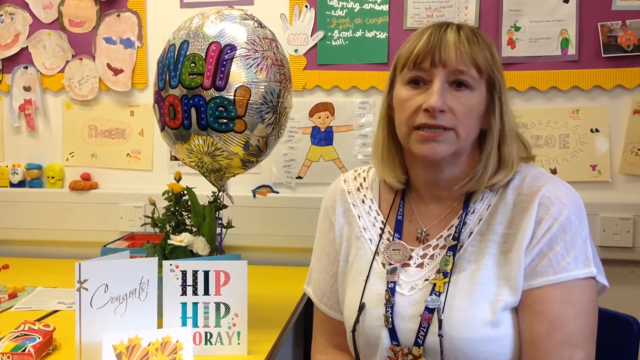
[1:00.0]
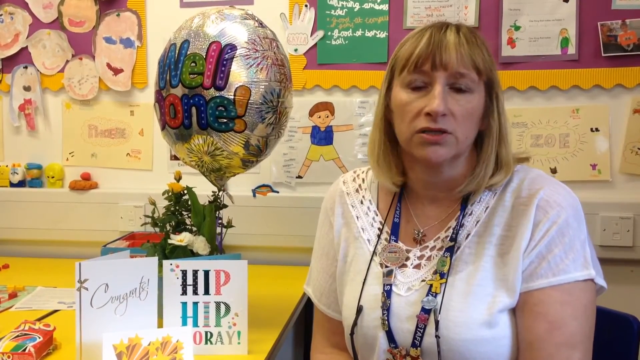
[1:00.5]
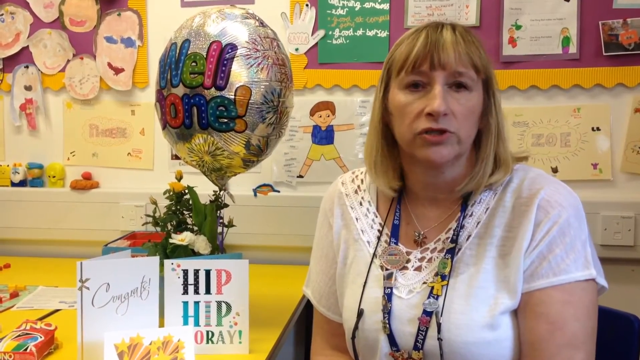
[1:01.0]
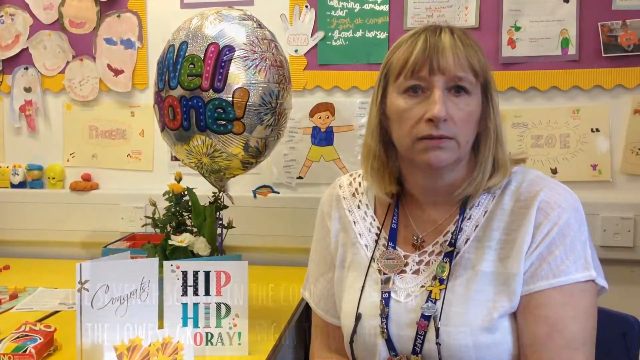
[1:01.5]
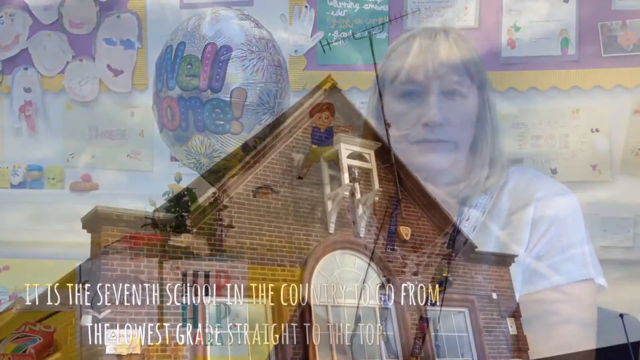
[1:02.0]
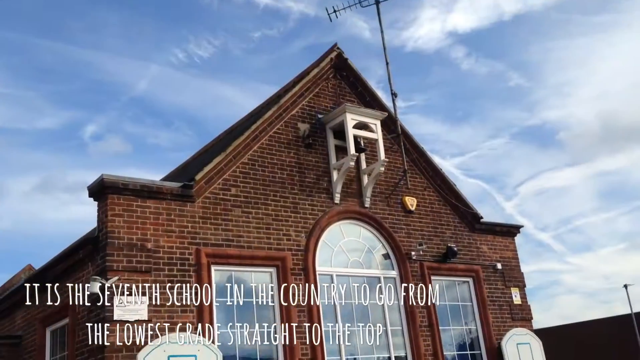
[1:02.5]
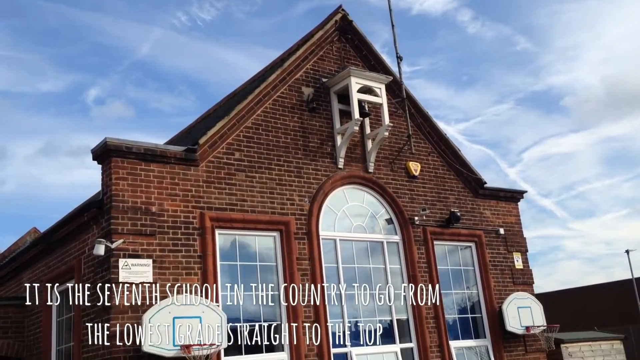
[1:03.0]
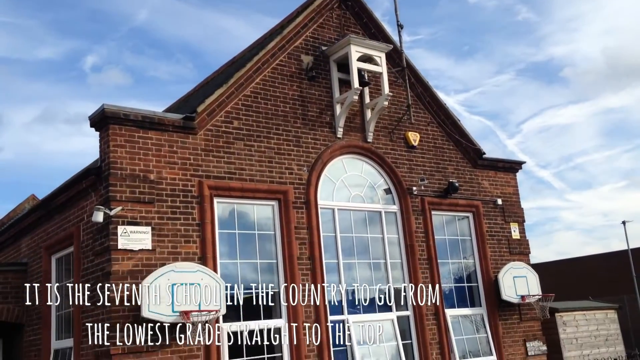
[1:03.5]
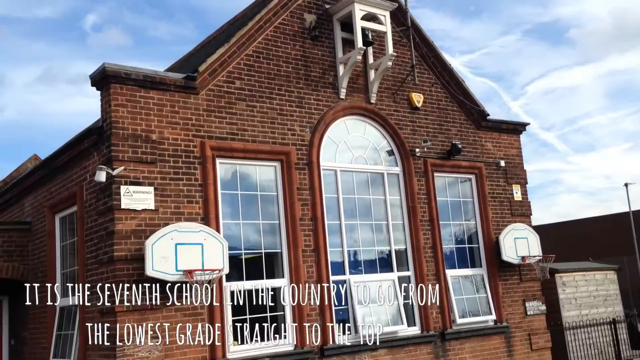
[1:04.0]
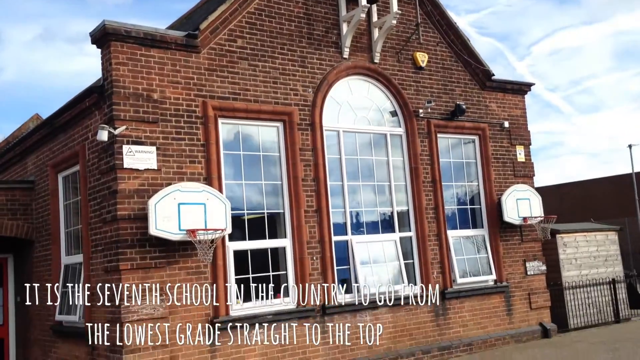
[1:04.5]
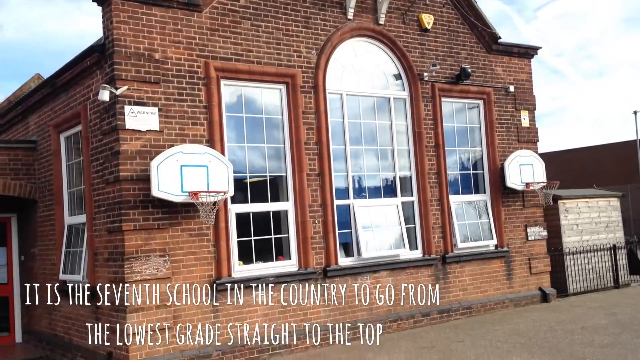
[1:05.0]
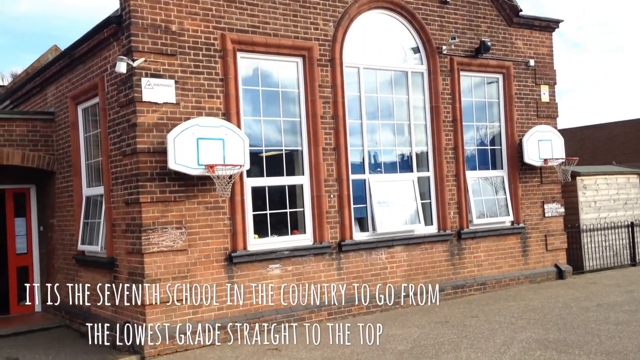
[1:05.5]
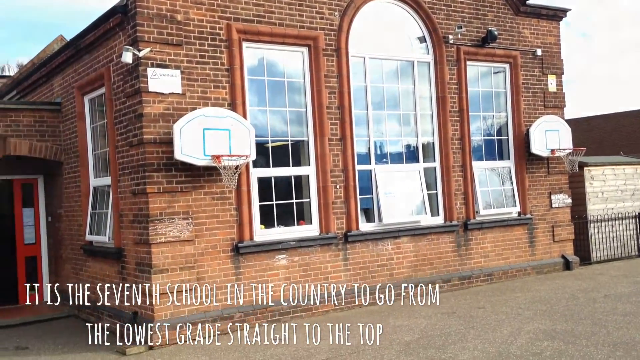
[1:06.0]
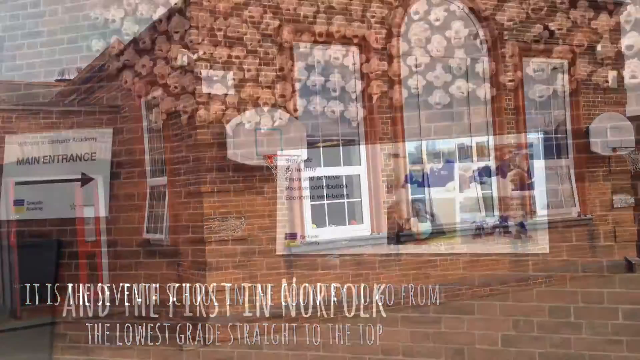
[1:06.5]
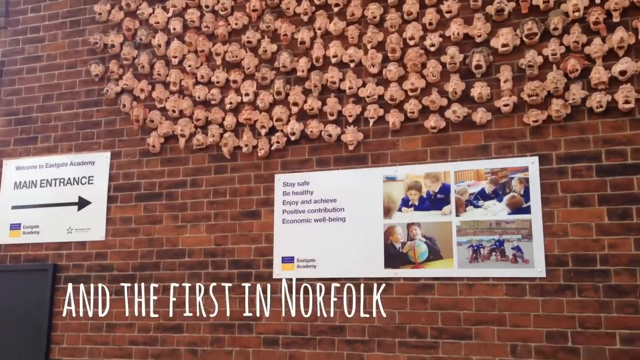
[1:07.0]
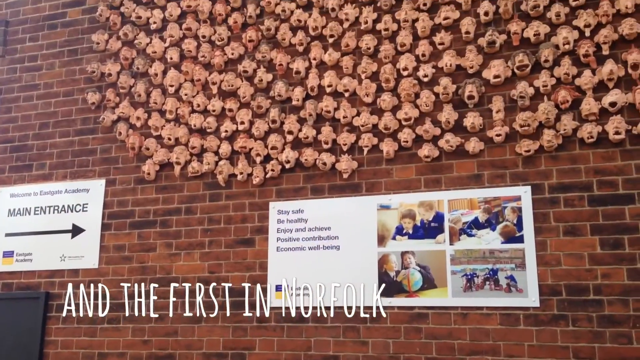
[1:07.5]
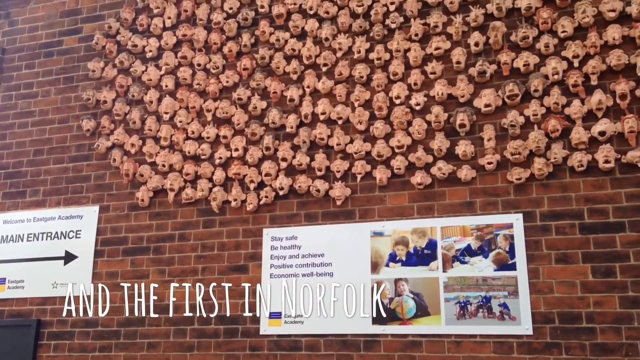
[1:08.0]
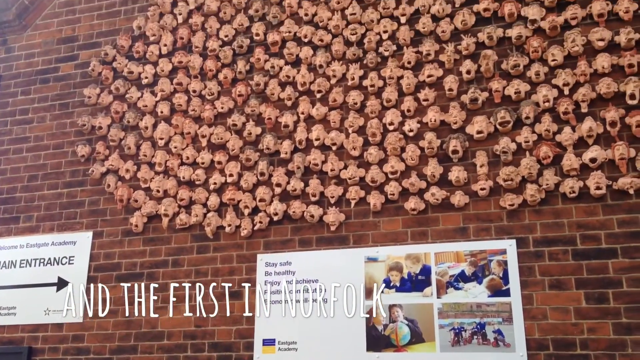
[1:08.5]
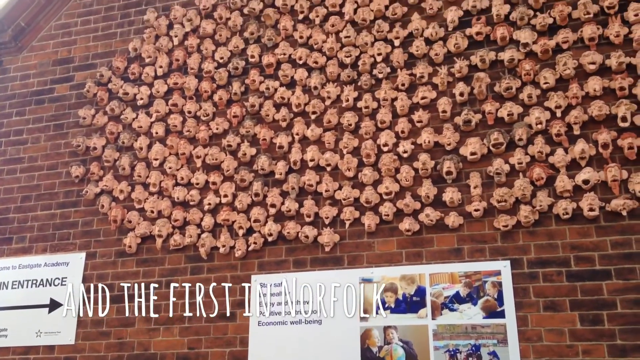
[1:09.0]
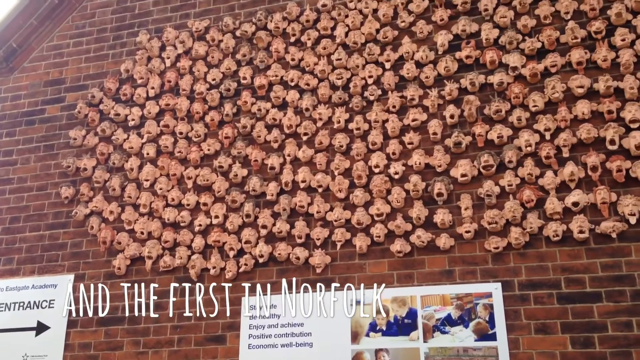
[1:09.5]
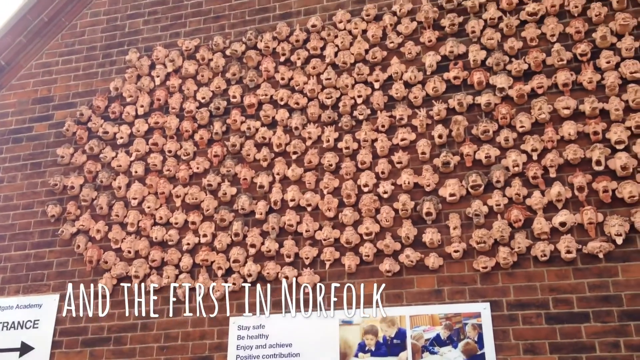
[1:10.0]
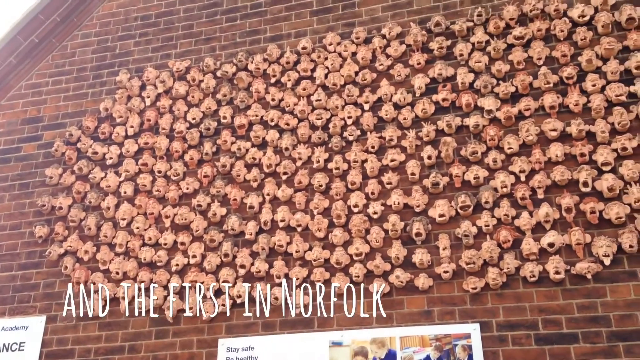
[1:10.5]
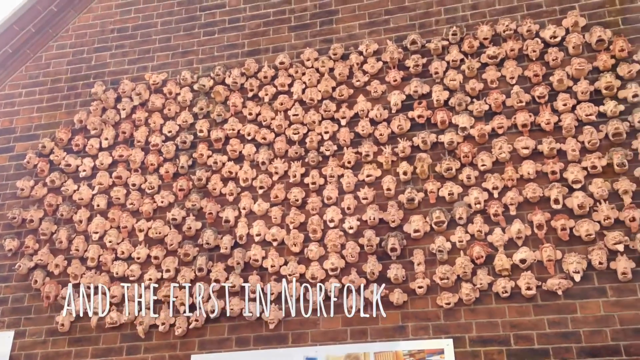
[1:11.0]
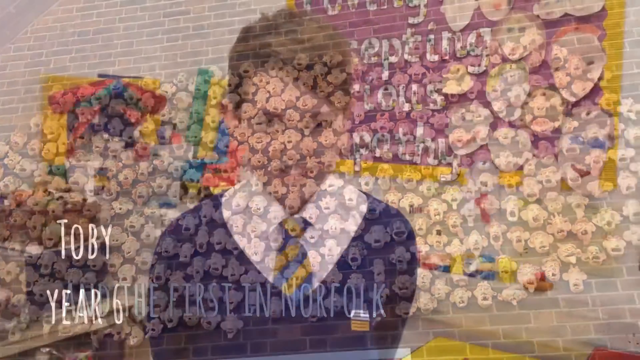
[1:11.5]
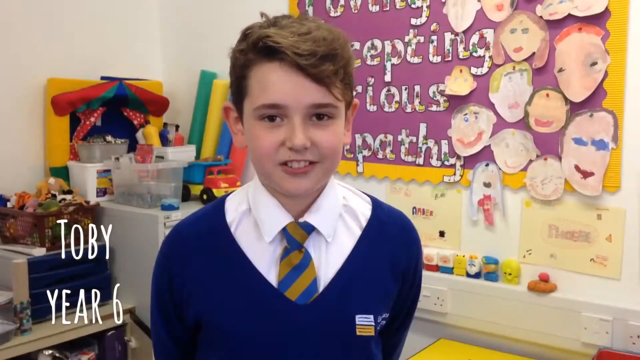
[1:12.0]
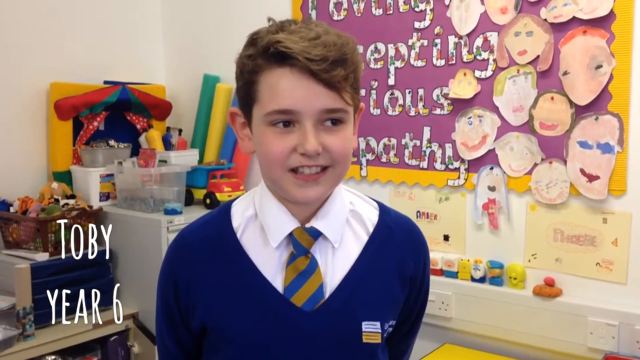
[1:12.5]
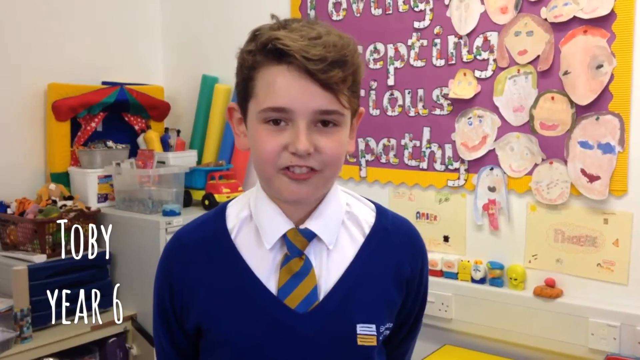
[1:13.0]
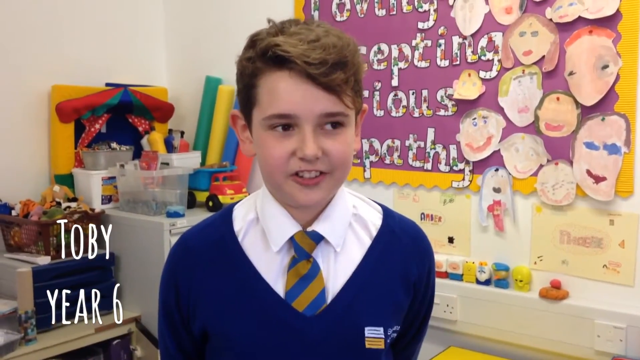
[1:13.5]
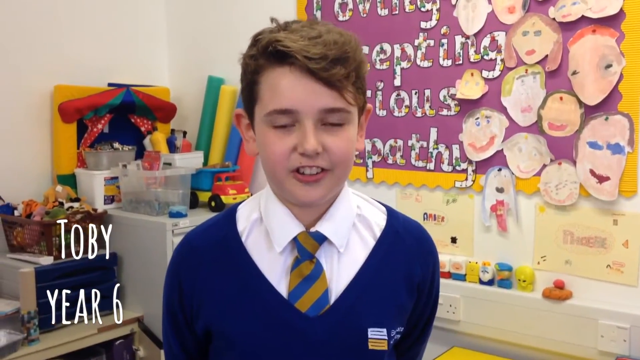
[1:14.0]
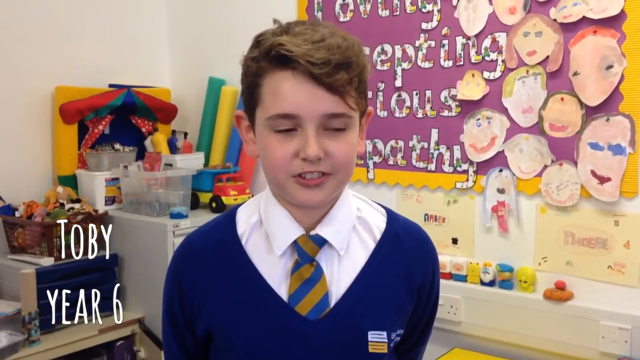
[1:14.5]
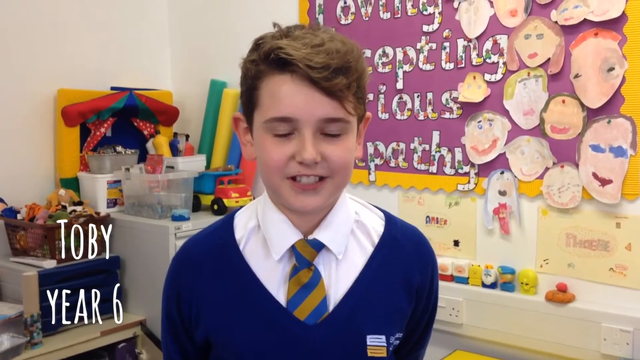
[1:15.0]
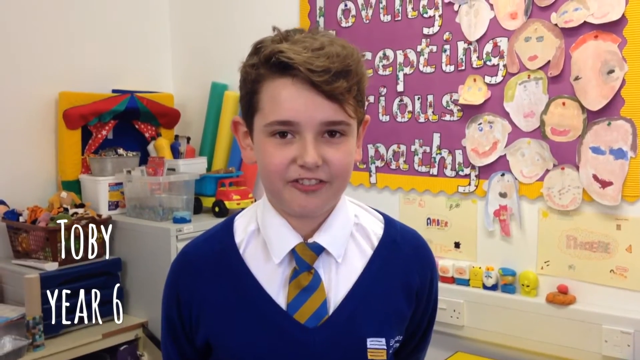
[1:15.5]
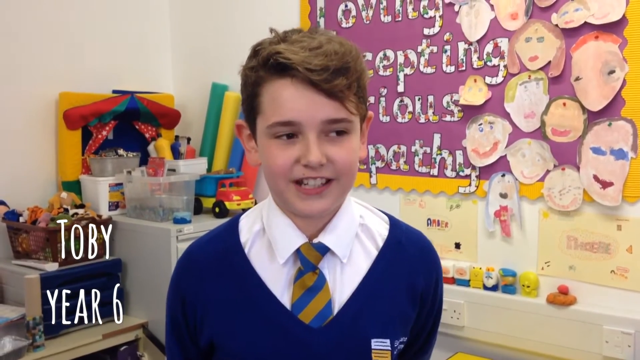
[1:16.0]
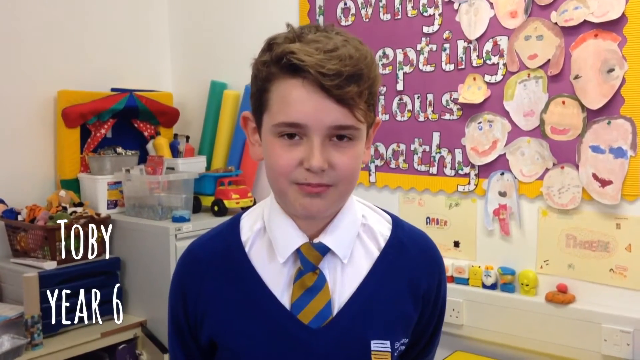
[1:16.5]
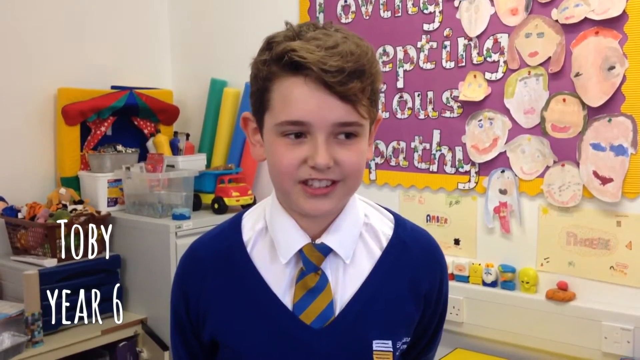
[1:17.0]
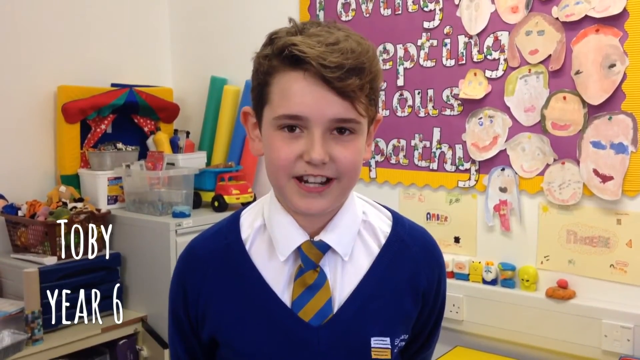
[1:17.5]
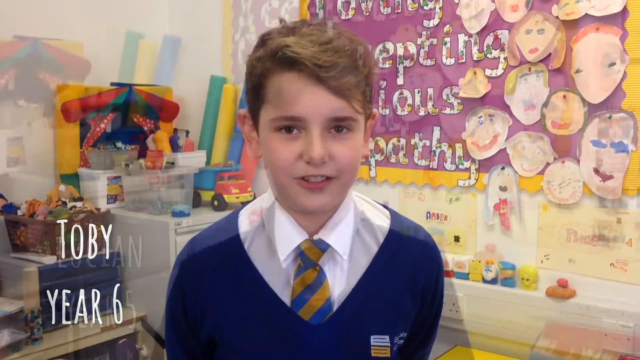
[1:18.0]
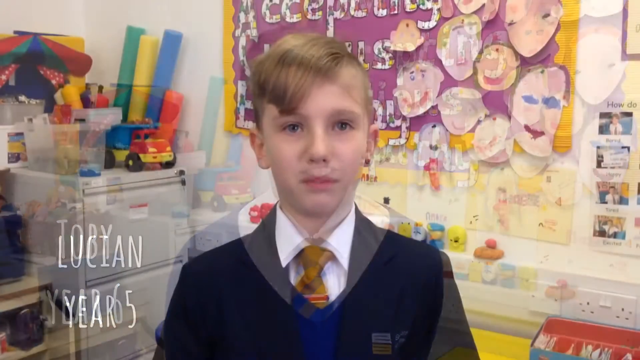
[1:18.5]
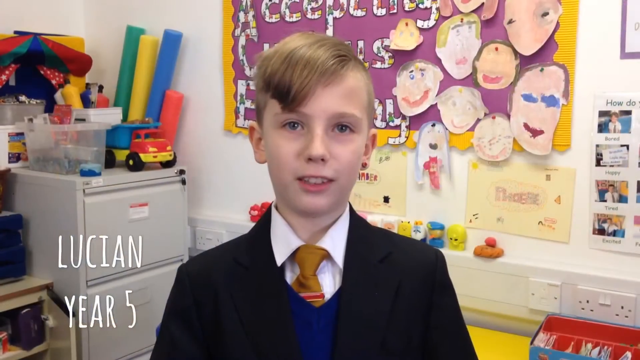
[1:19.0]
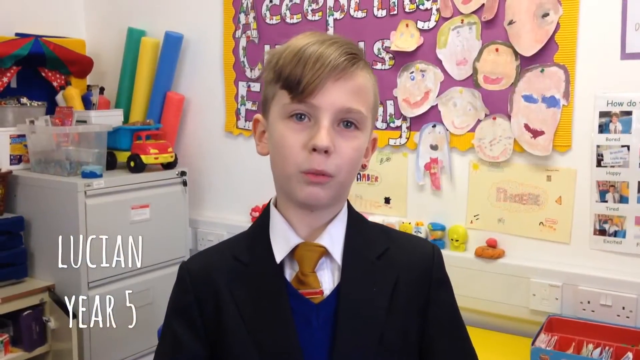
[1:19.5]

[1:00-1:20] The principal looks off to the left, turns her attention back to the camera and kind of shrugs a little. The camera is then panned up to the top of a brick building with a peak; on its front is a little white built-out place with a bell. An old-school antenna hangs from the top just right of the bell. The sky is partly cloudy, blue where it is visible, and mostly cloudy down the right side. The camera pans down to a big entranceway with a big round glass circle that goes up almost to the top, with two windows beside it. To the right of the right window is a basketball goal, and there is another basketball goal on the left side. White text scrolls across the bottom as the camera pans down. At the bottom are three square windows; the center one and the right one are open, as is the one on the left side of the building. The camera pans to a brick wall with a small square on the left that says "main entrance" with an arrow pointing right. In the center toward the bottom, stretching almost to the right side, is some black text down the left side and four images of the school or children. Coming from the right almost all the way over to the left, about two inches in, and going off the top, are what look like drawings of heads; as the camera pans up they cover this whole part of the building. The video then goes to a little boy talking in a classroom. He has brown, kind of shaggy hair about three or four inches long, combed over to the right side, and wears a white shirt with a blue and yellow tie tucked into a blue sweater. Text identifies him as Toby, in year six.